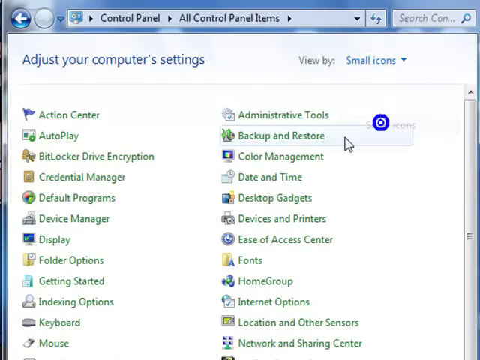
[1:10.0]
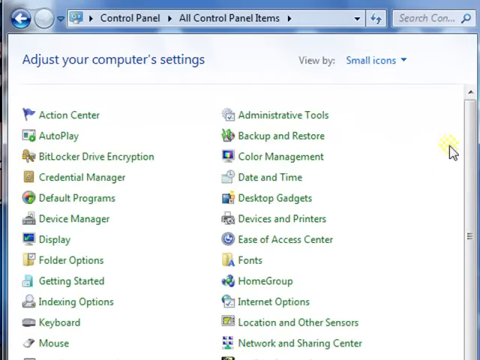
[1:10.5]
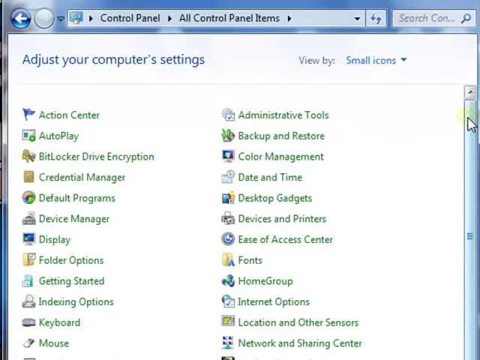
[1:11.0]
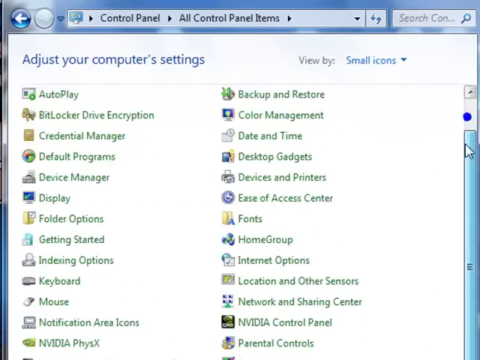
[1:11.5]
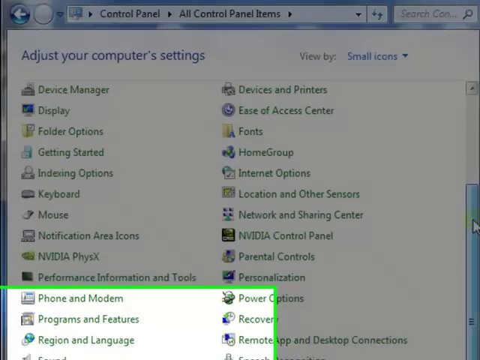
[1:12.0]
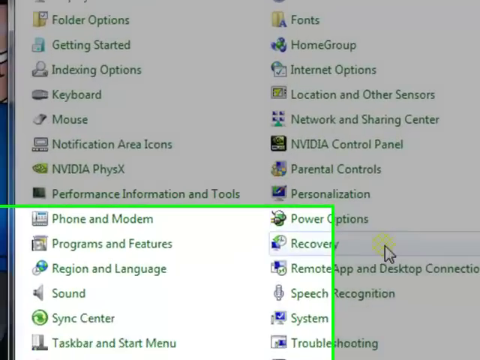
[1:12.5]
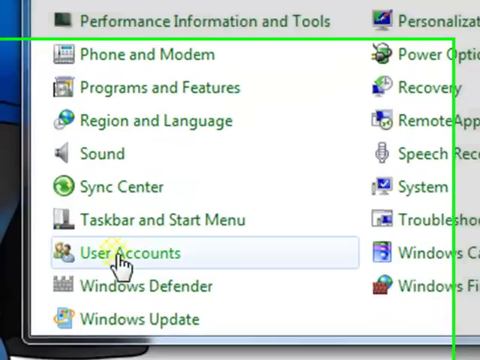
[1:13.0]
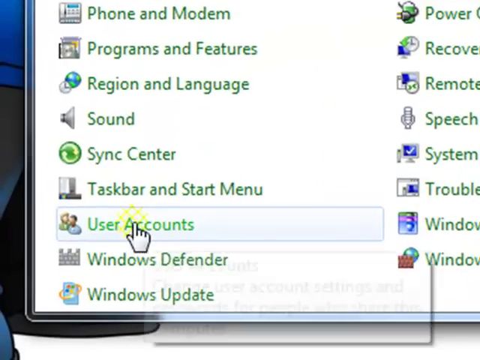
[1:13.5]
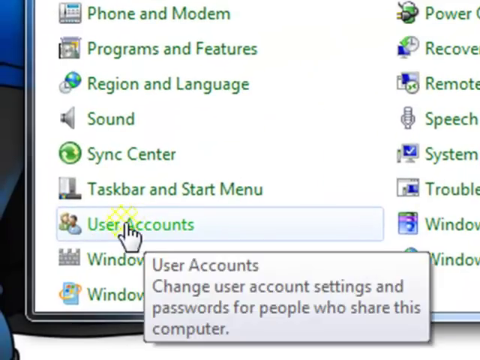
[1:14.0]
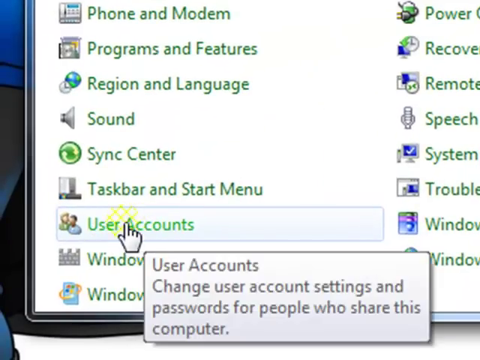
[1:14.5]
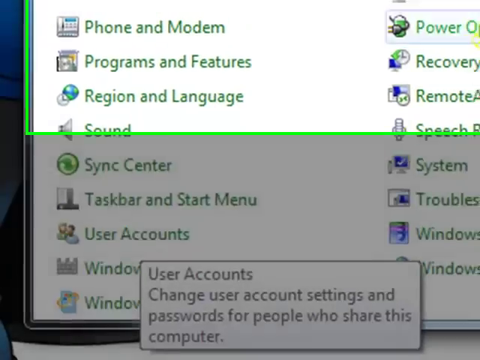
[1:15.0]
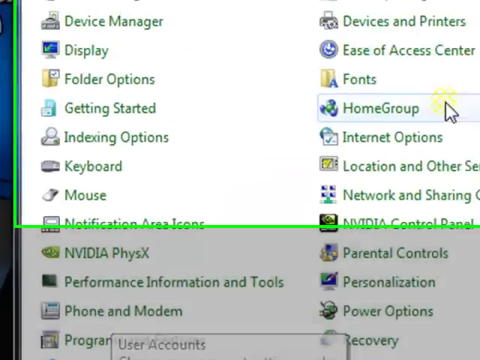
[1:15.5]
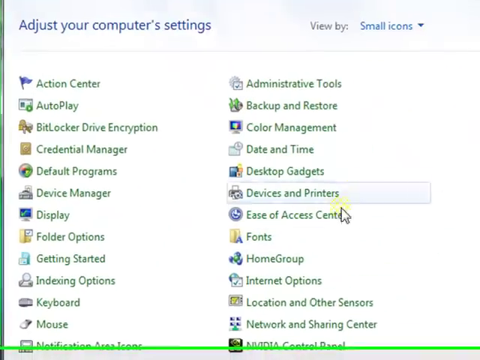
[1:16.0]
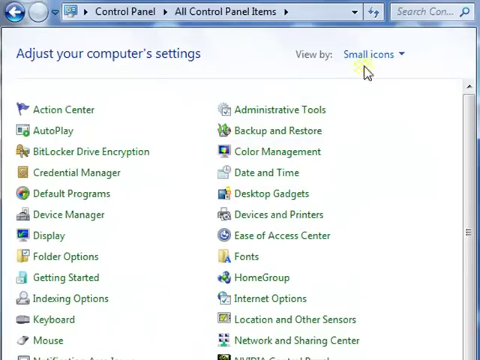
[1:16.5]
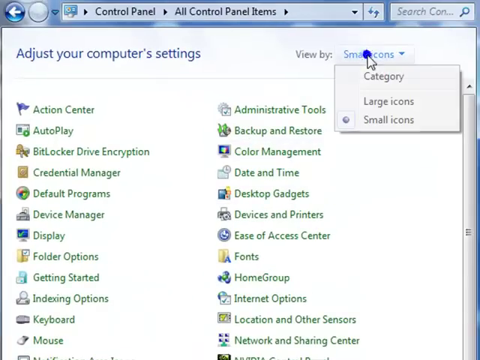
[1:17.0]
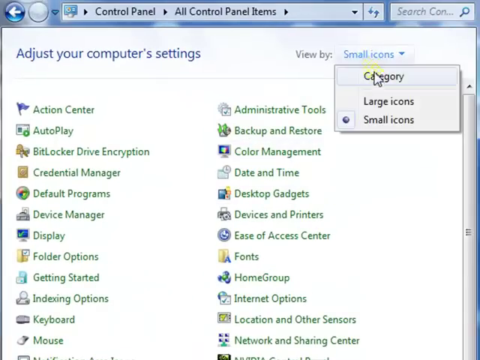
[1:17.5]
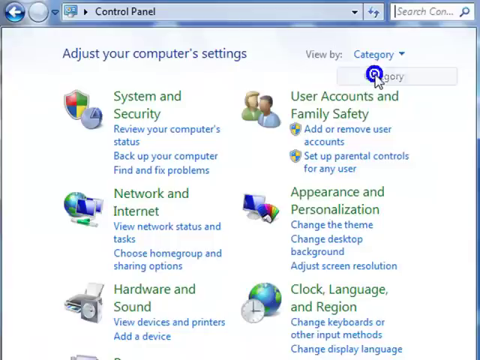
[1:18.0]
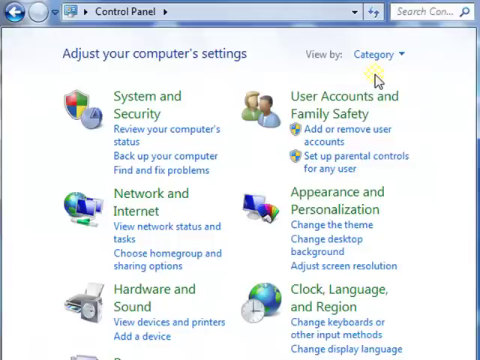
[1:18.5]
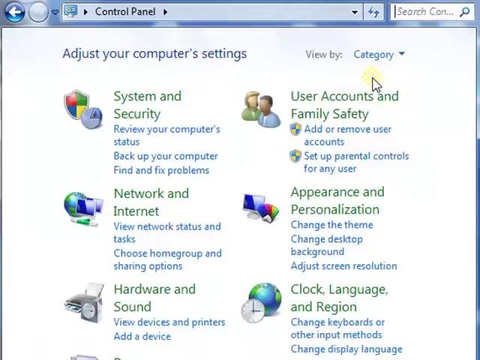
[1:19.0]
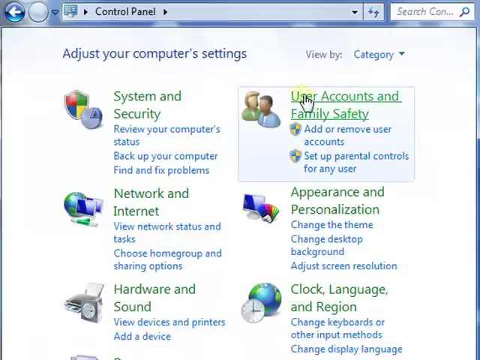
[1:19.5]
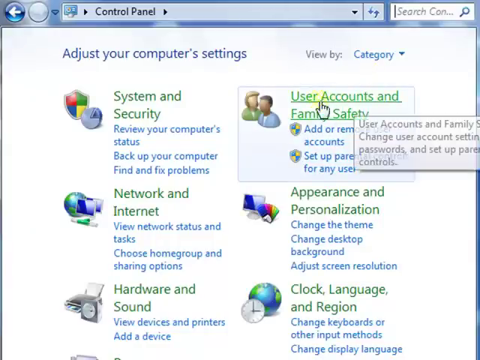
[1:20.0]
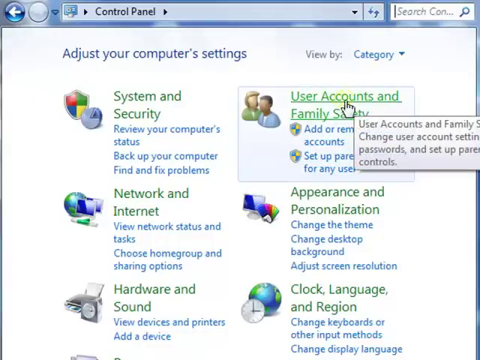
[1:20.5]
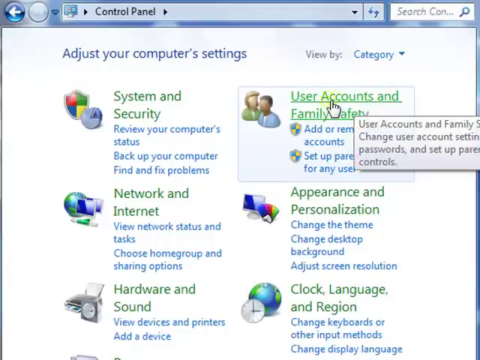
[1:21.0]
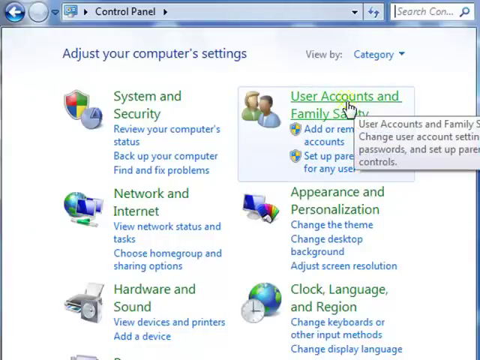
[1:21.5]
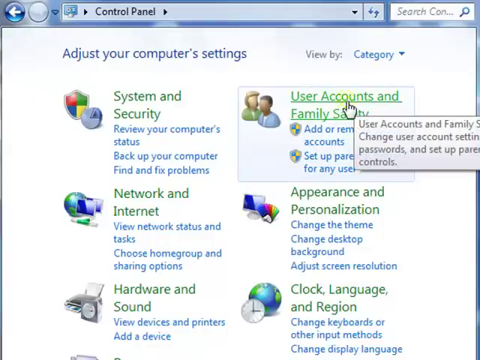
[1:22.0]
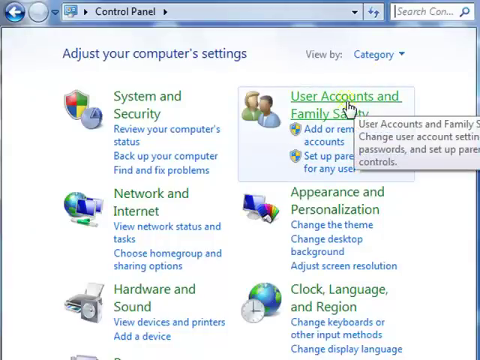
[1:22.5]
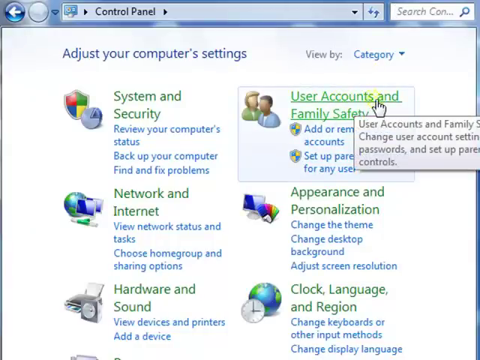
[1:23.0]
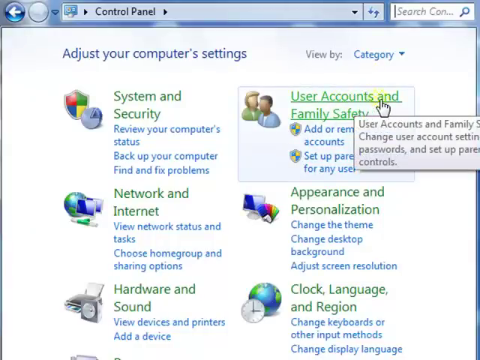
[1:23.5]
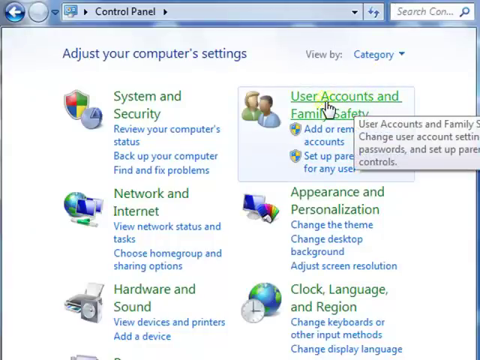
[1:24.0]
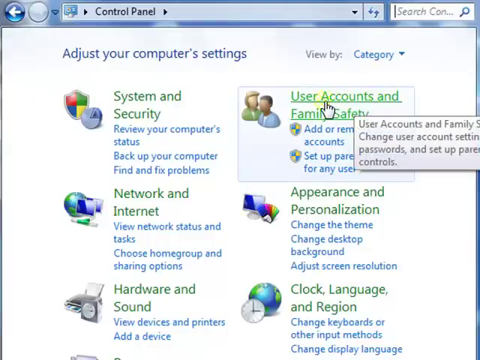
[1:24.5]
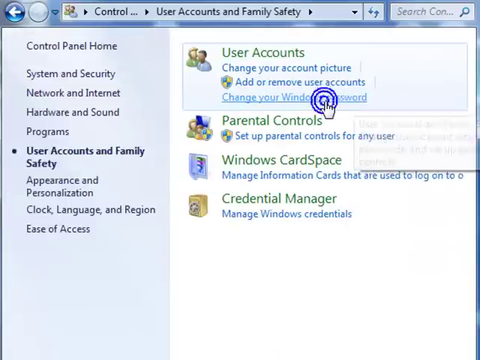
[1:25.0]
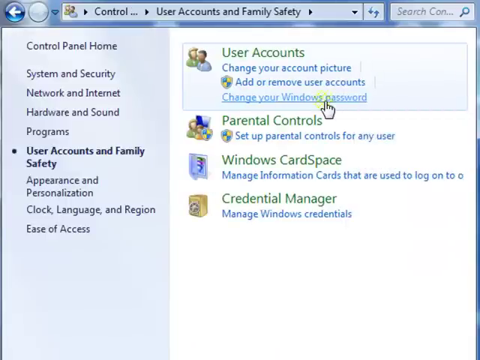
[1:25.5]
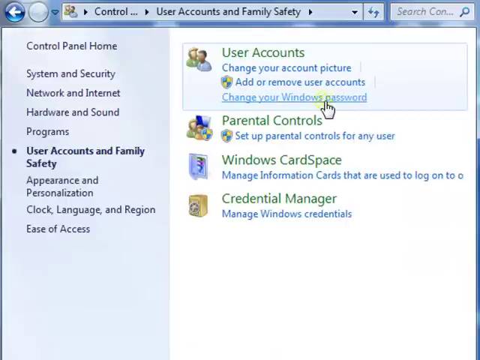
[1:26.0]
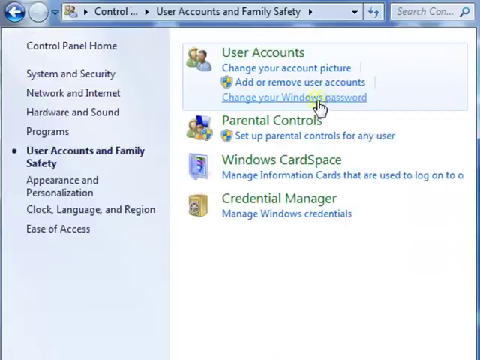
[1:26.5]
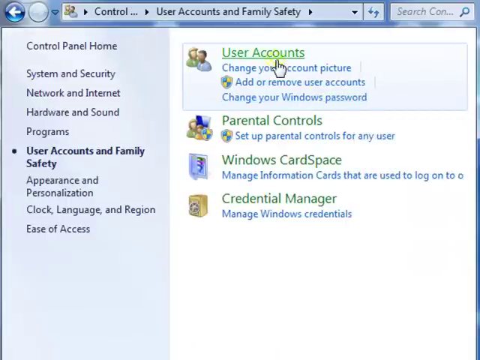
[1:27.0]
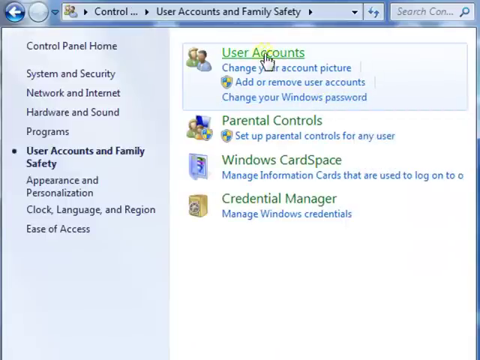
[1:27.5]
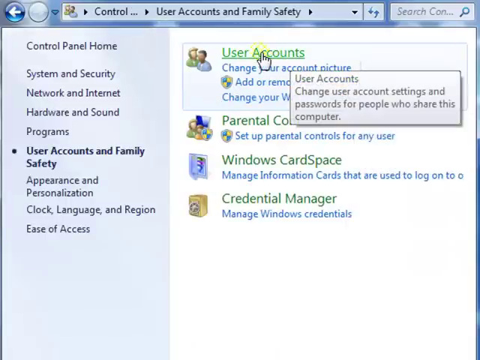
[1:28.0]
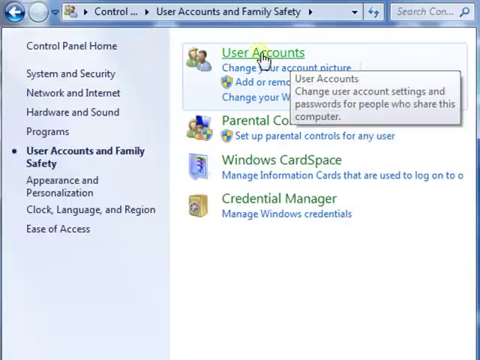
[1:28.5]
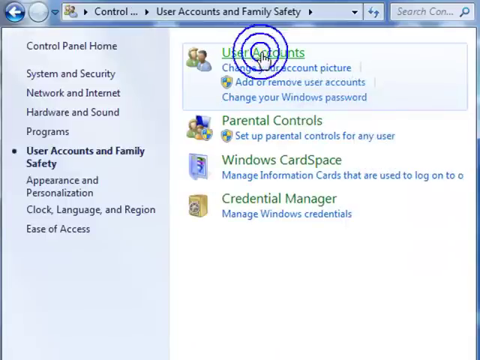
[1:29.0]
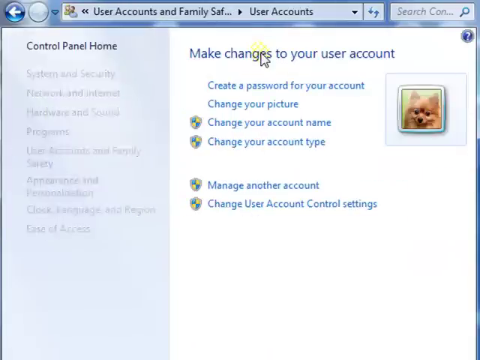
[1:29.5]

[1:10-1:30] The Windows control panel has a bluish color at the top and a big white background area below, with everything highlighted in green, including display, font, folder options and color management. The person scrolls down using the scroll bar on the right-hand side. The view zooms in toward an item under user tasks that is highlighted, reading "user accounts, change user account settings and passwords for people who share this computer". The view scrolls back up a little, the icons category is clicked, and then category again. The user accounts and family settings, possibly family safety, option on the upper right-hand side of the category selection is looked over and clicked, and then user accounts at the top is clicked.